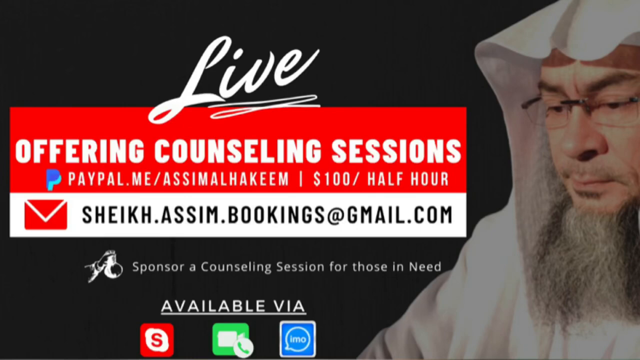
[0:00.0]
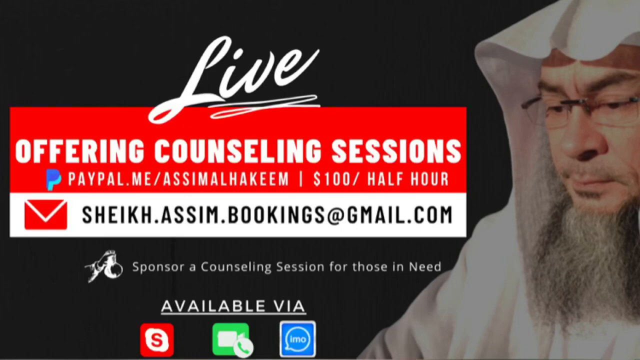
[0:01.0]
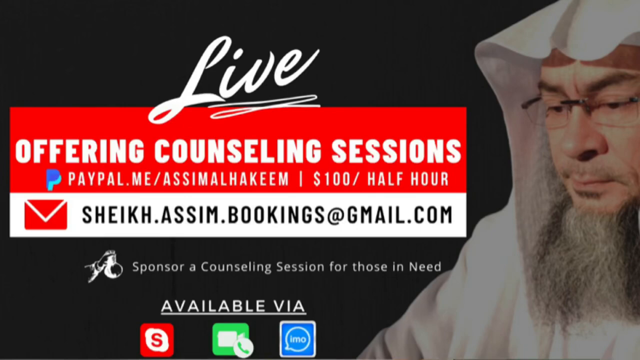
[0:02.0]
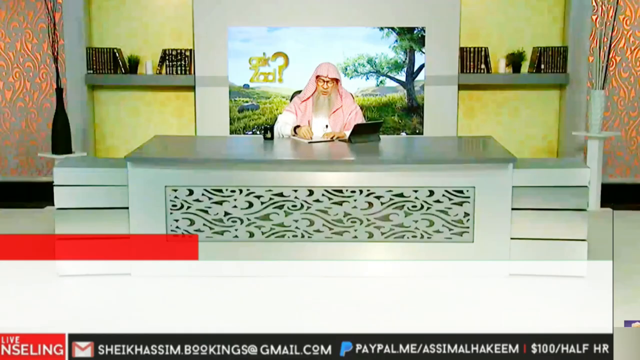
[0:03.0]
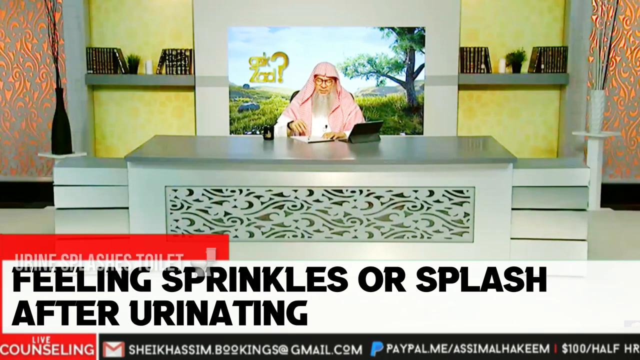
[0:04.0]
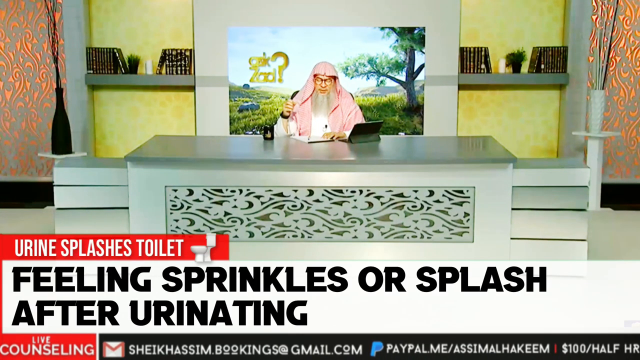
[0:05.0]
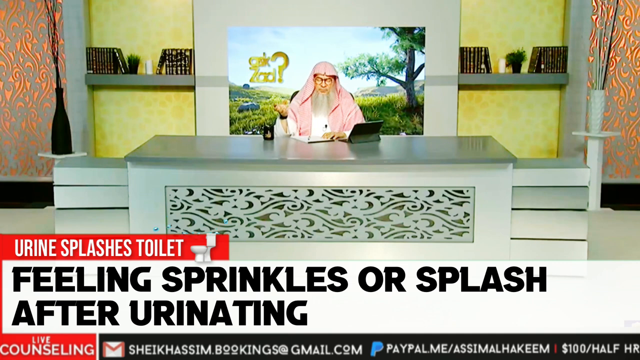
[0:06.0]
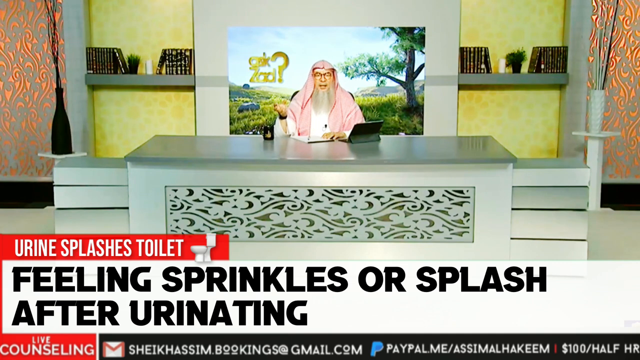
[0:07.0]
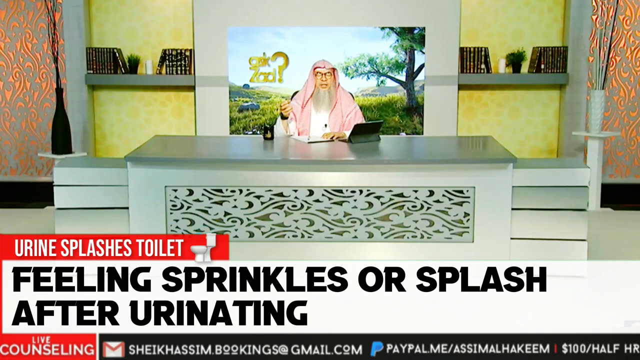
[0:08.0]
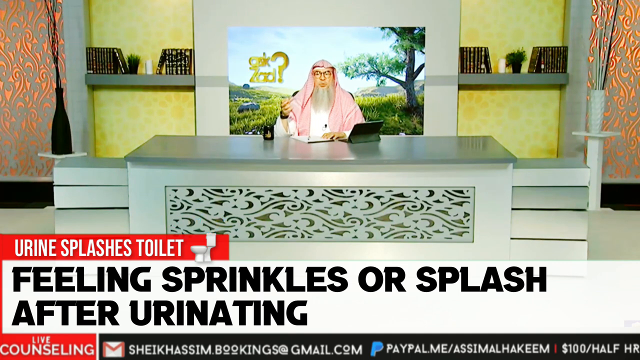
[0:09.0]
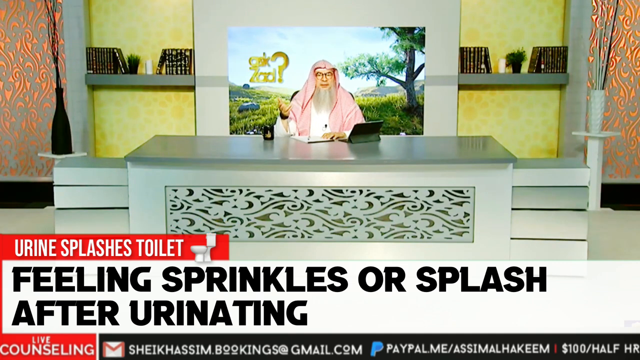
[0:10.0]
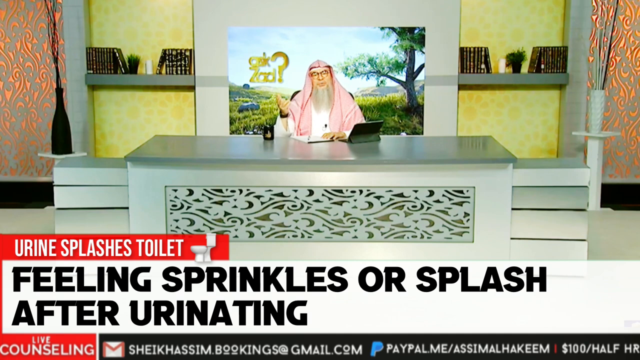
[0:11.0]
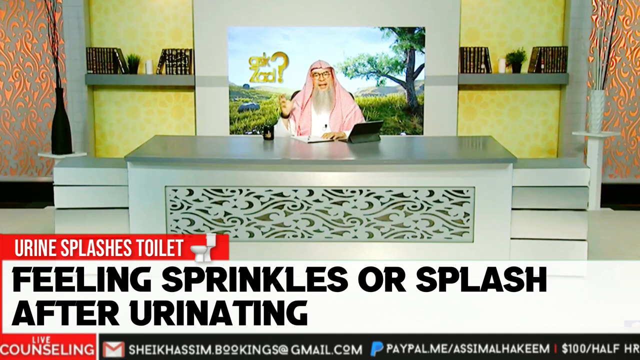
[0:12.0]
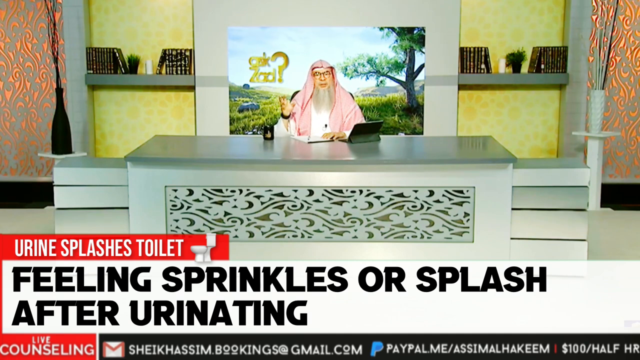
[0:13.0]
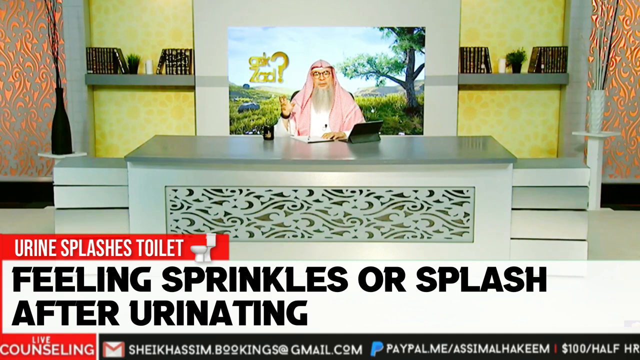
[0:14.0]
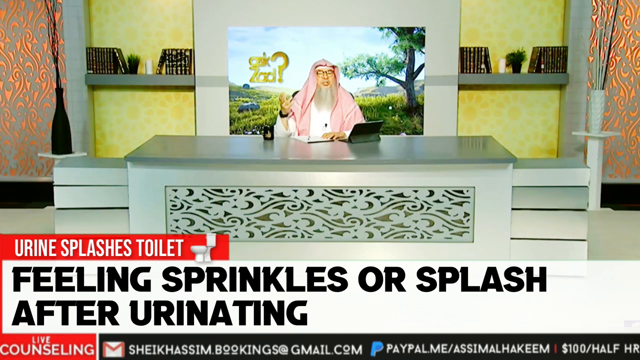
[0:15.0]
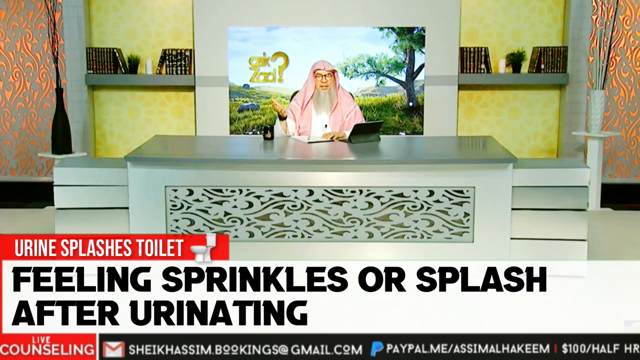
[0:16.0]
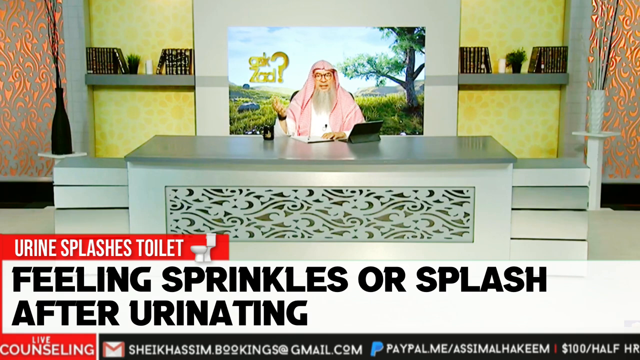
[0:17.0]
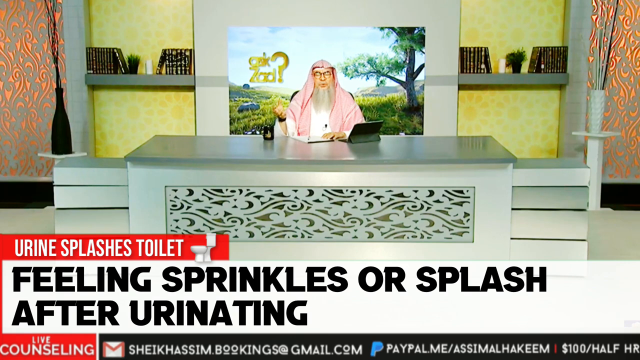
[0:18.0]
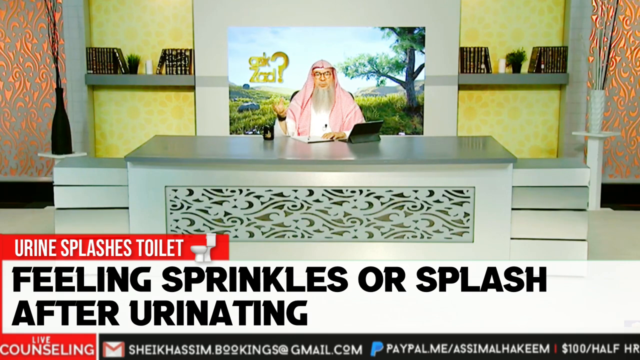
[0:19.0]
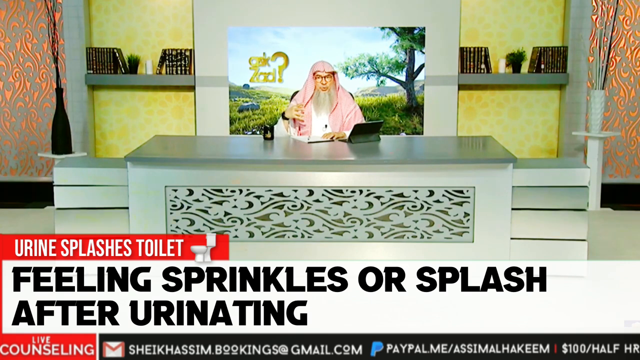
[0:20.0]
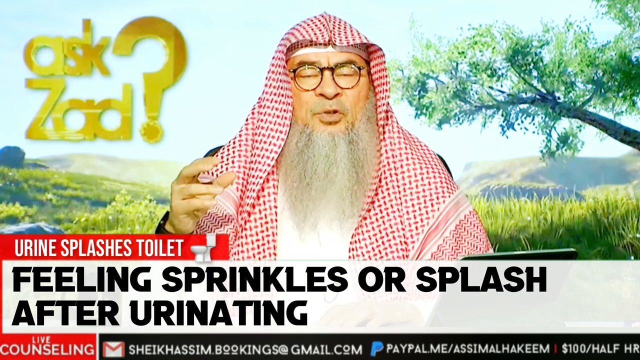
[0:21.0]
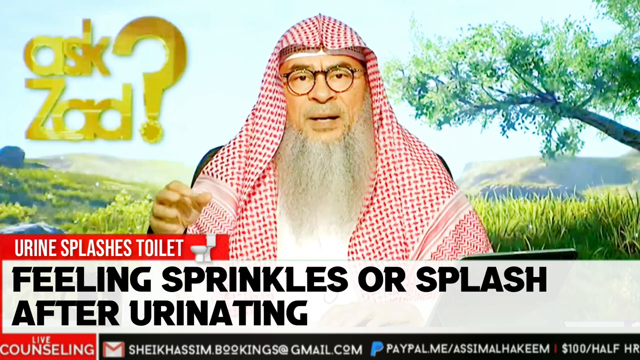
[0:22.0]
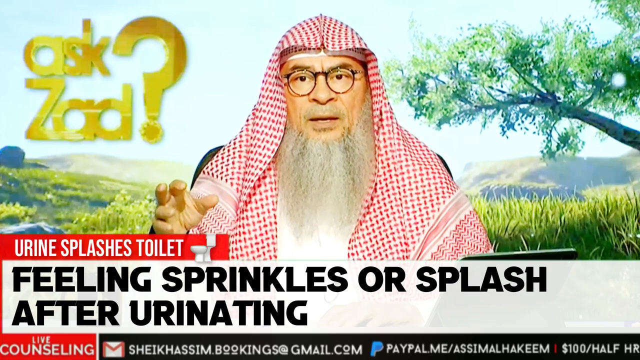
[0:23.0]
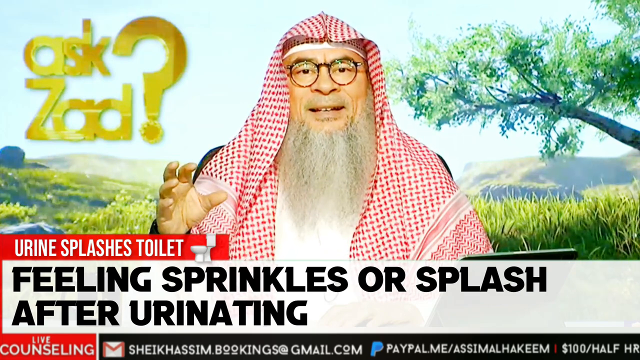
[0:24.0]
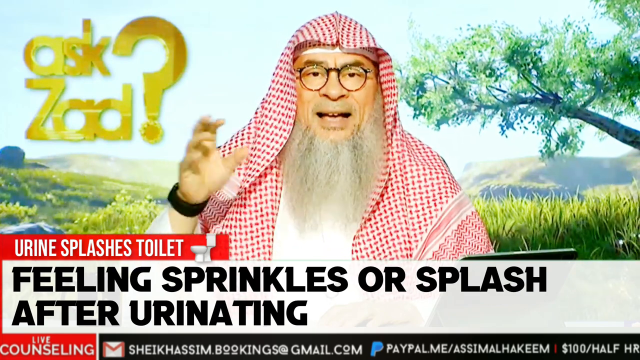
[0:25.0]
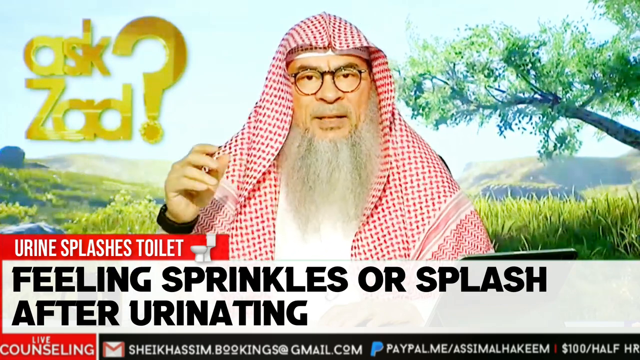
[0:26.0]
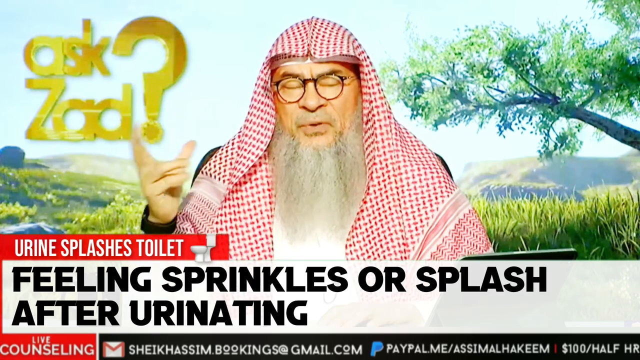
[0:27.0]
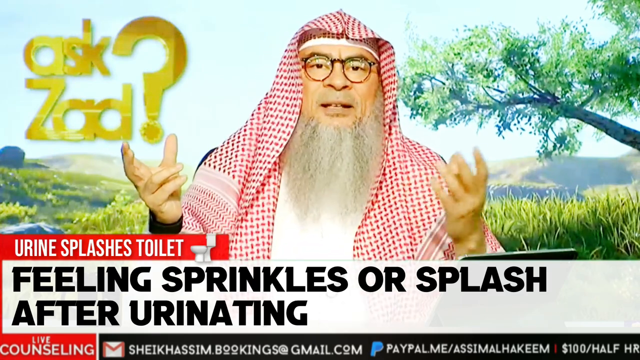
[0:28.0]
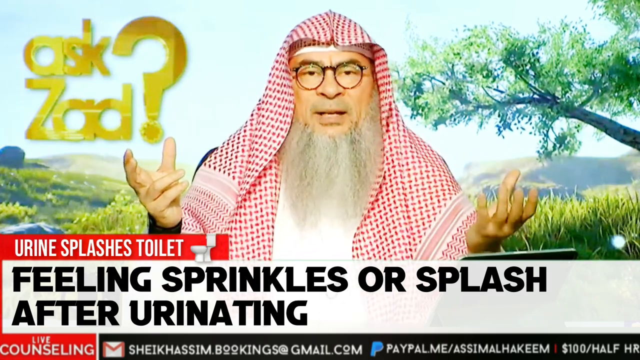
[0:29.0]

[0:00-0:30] The video offers live counseling sessions. Information to pay by PayPal is shown, with a price of $100 for half an hour, along with an email address, and it is sponsored by a counseling session for those in need. On a black screen, the Sheik appears. He wears a white robe and head covering and has glasses, quite a long, stringy, mostly salt-and-pepper beard, and a very thin mustache. The screen shifts and he is sitting at a very wide desk, like a counter, with a mirrored design on the front. Behind him is a big picture that looks like nature, with a lot of bushes, bright sun and a big tree, and the words "ask Zad" with a question mark. On the wall behind him are some books on gray shelving, and there are decorative wall designs on each side, black on one side and white on the other. The setting is kind of office-like. A caption reads "urine splashes toilet feeling sprinkles or splash after urinating," and an animation of the toilet splashing appears over it. The video zooms in, showing that the Sheik's head covering is white with red markings all over it. There is a black mug with a gold logo, and what looks like a tablet is propped up. He talks to the camera, very animated, using his hands.